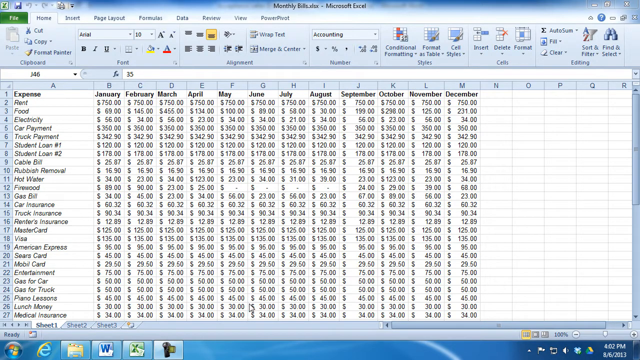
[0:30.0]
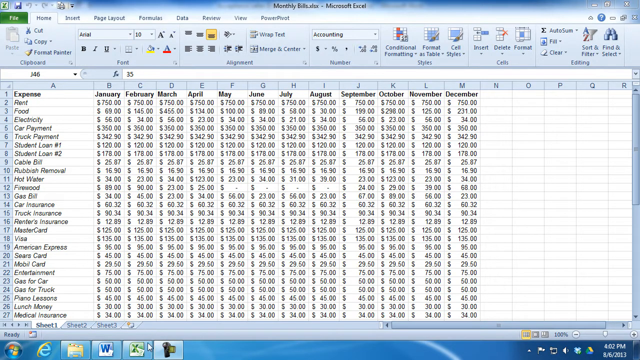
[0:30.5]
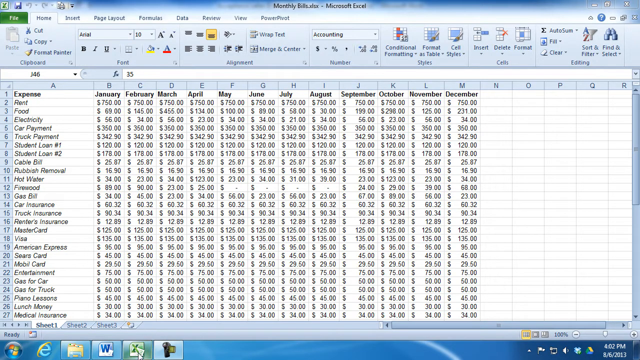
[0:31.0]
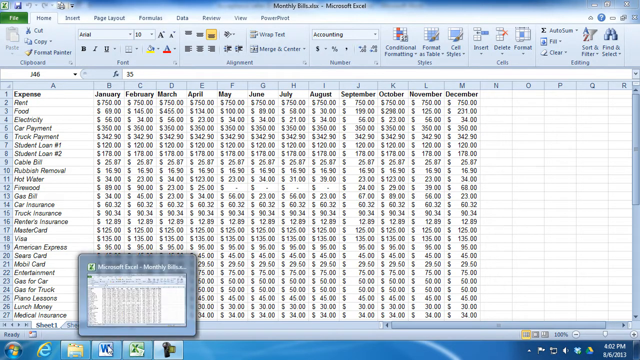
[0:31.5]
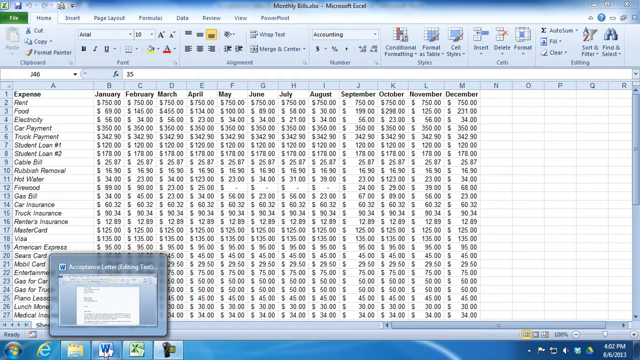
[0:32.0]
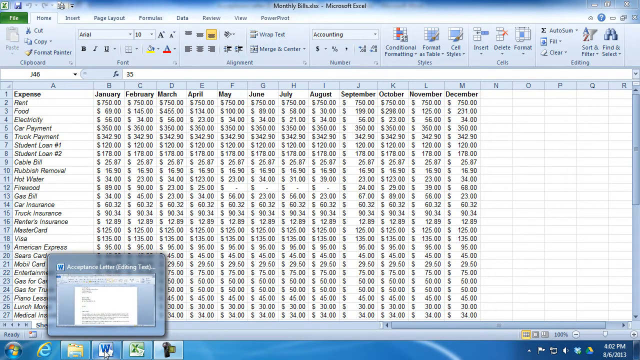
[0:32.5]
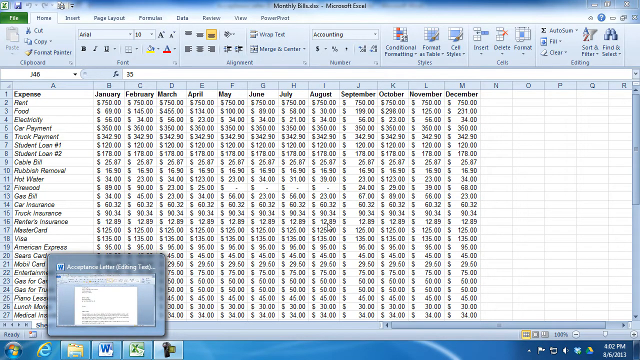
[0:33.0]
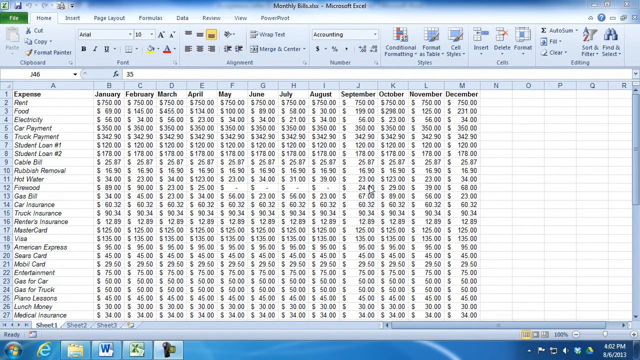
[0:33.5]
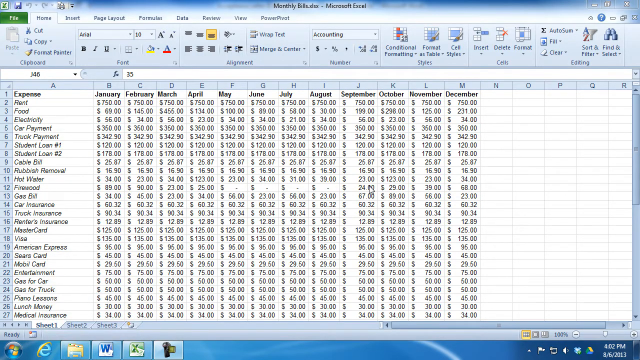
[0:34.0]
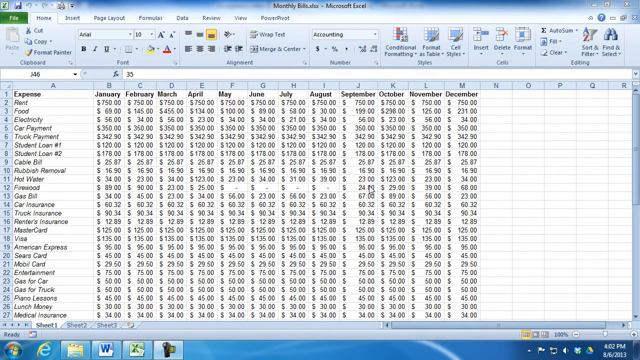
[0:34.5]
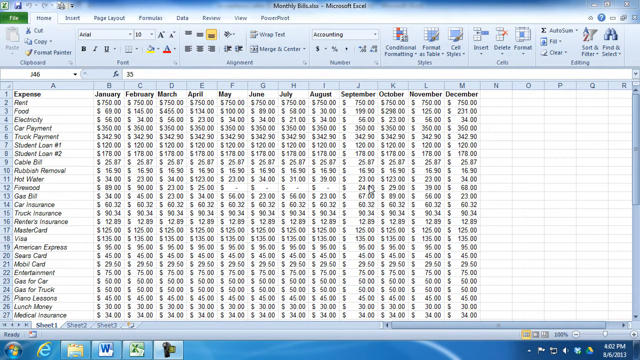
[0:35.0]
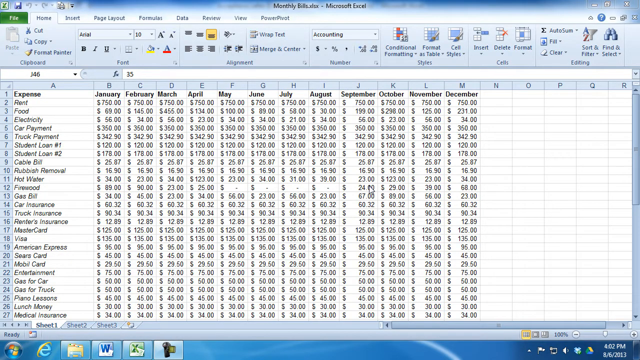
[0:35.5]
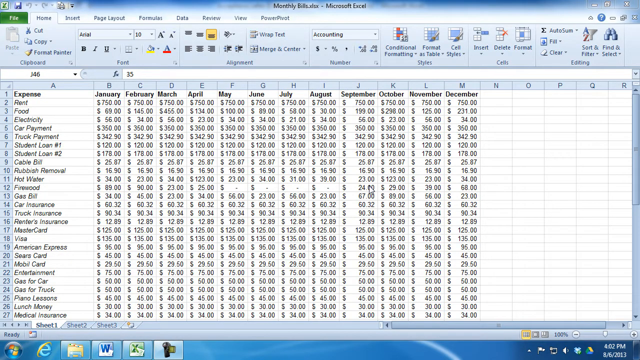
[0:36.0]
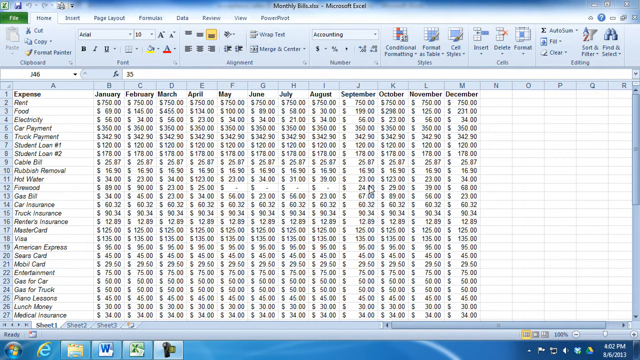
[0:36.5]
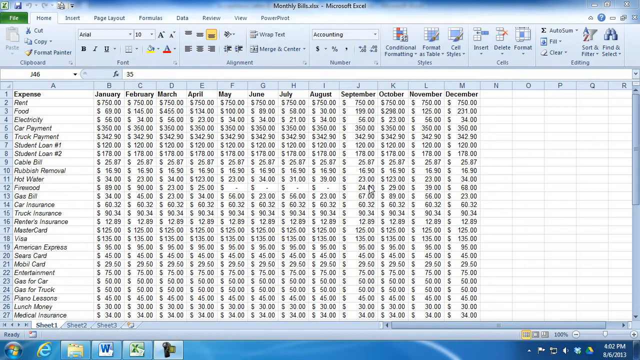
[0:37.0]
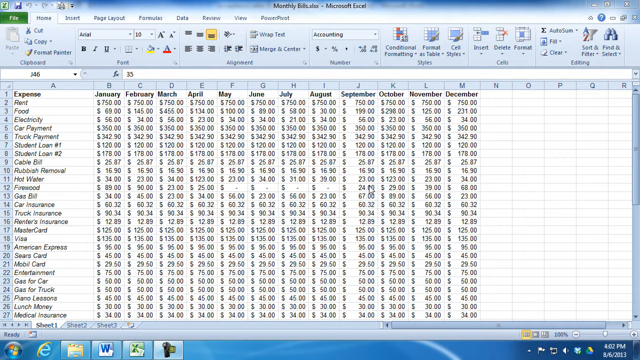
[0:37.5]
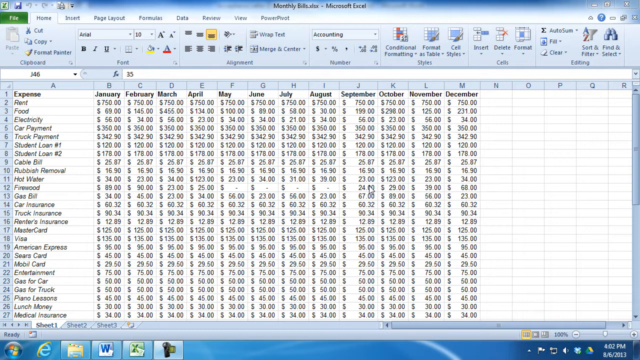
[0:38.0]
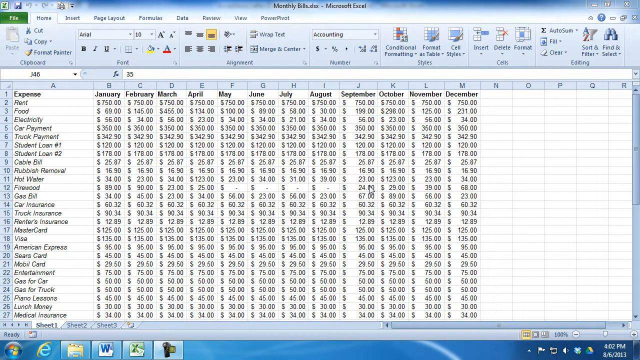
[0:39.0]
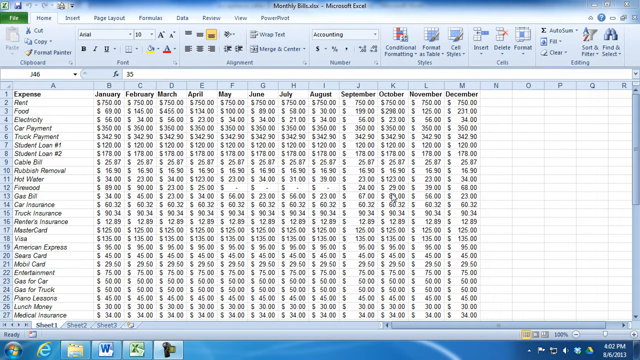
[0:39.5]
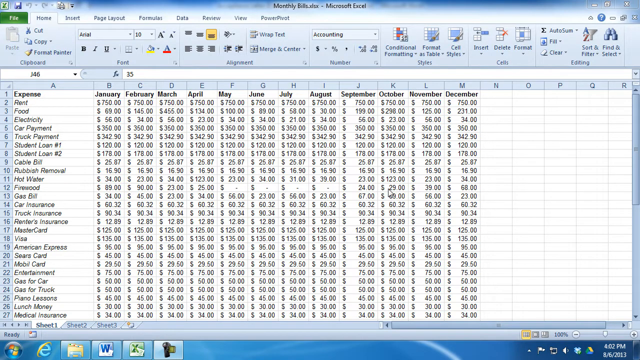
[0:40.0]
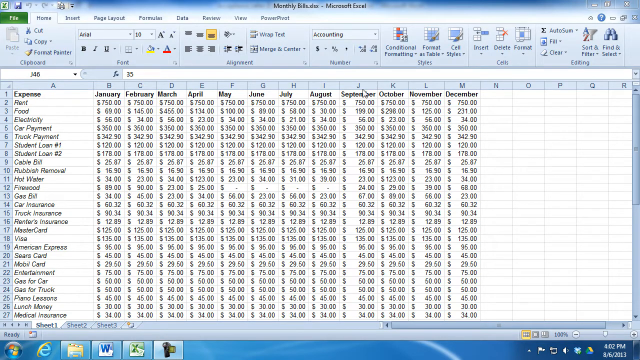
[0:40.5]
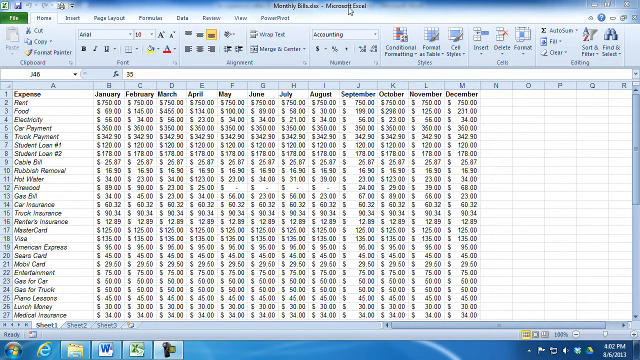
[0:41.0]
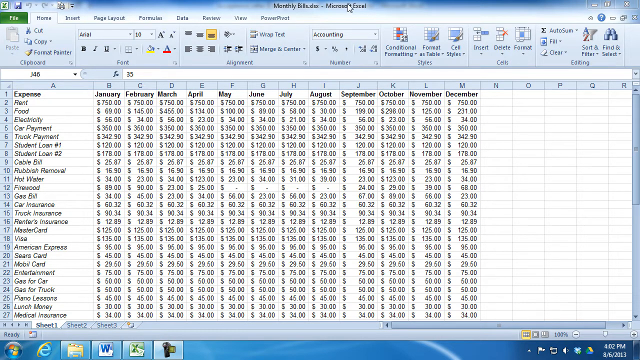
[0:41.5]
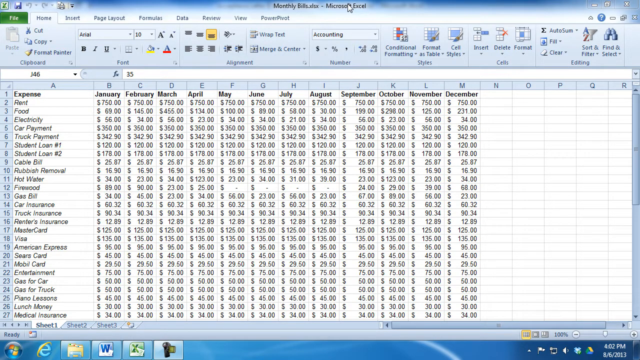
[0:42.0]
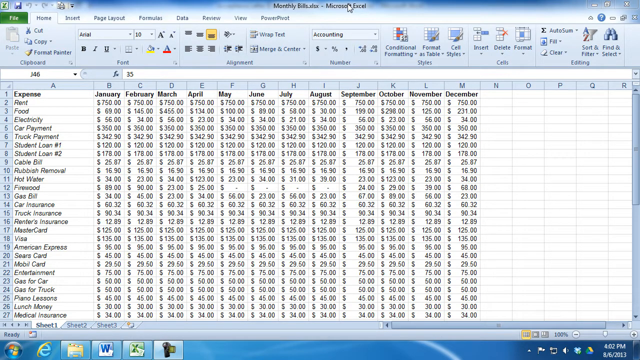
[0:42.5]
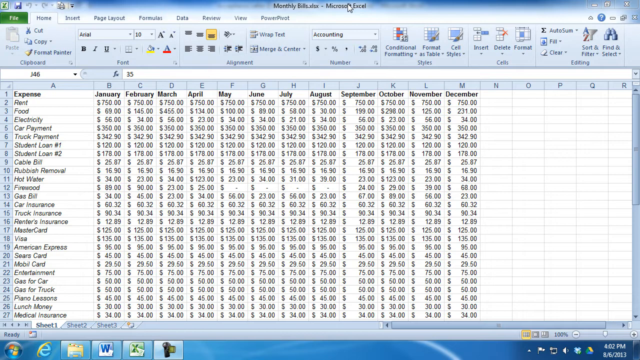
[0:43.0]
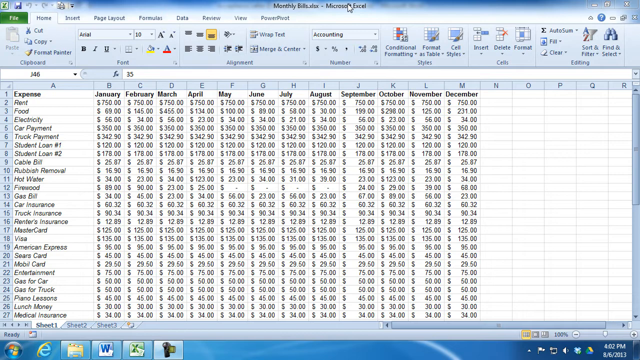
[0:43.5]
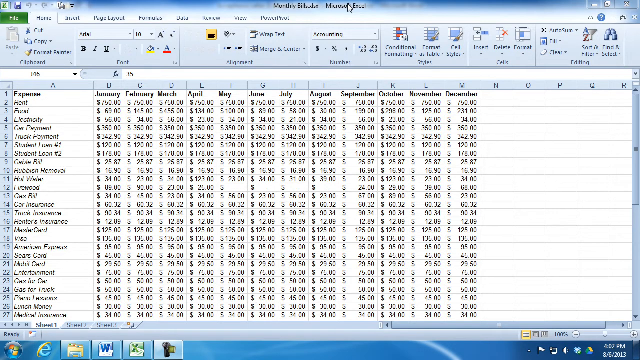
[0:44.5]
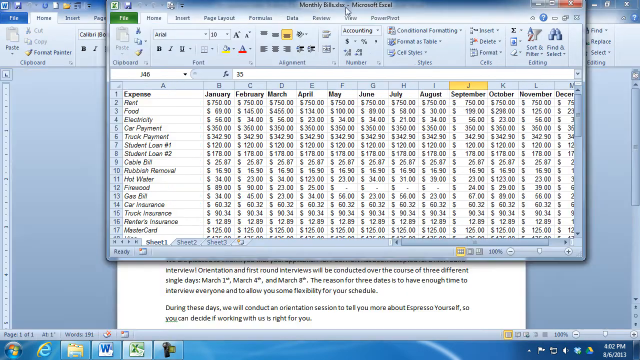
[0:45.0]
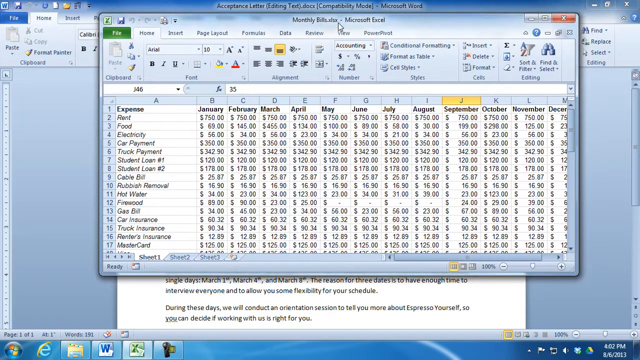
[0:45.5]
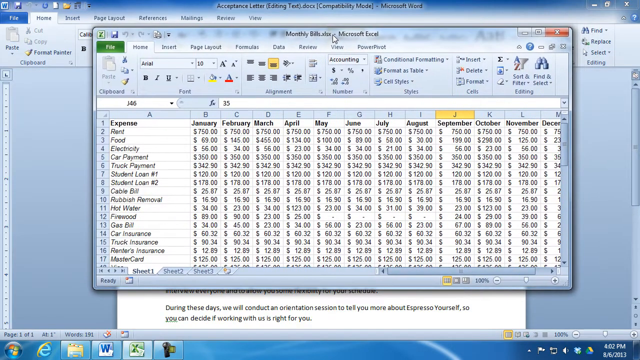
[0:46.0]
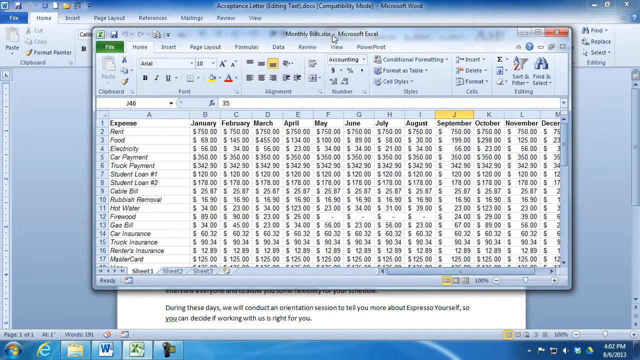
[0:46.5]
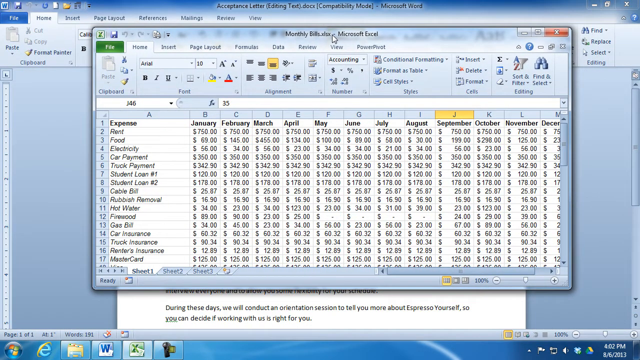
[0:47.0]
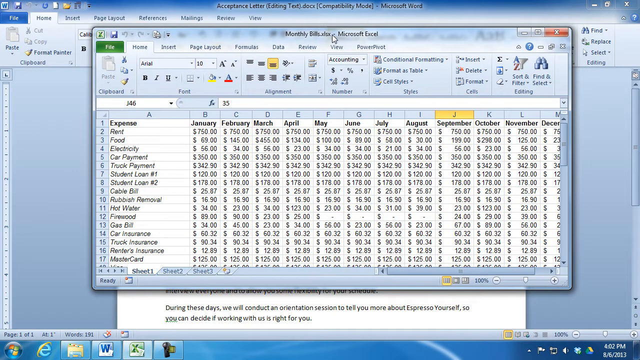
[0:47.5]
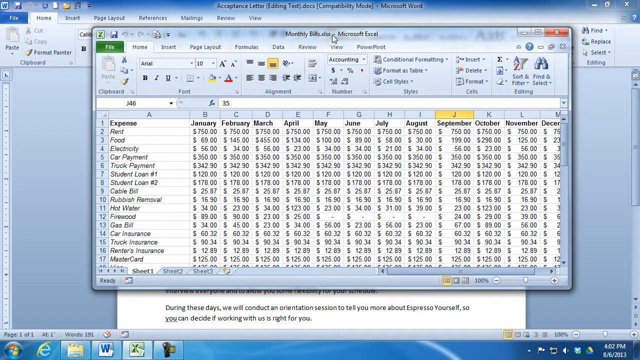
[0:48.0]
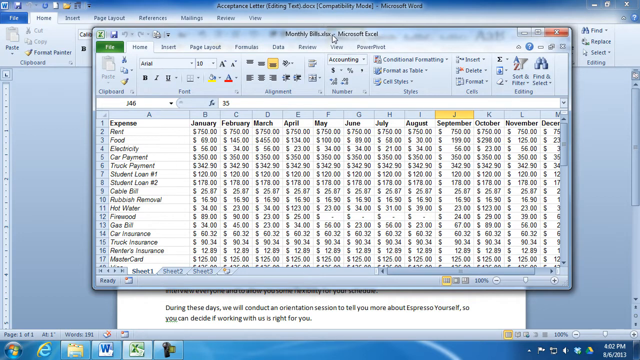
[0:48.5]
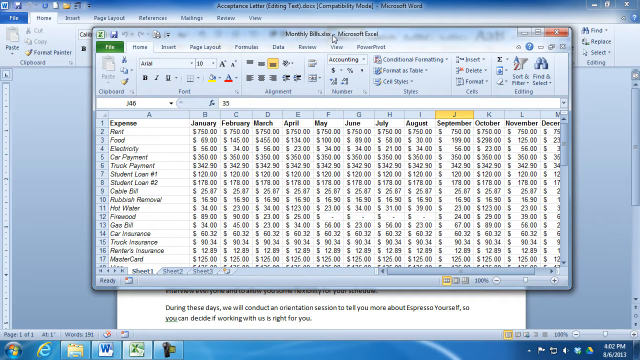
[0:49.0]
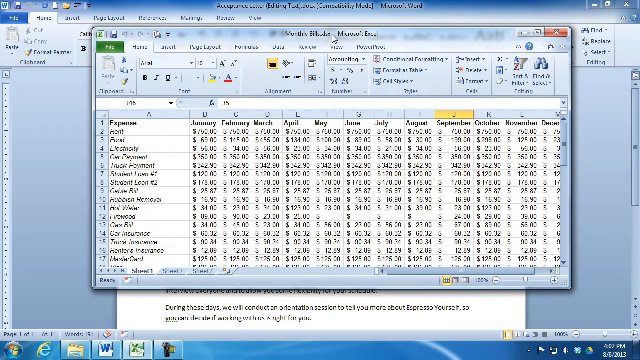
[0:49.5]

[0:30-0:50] A man moves the mouse pointer down to the bottom of the screen and, without clicking, hovers over different tabs, which show different documents. Hovering over Excel brings up a small thumbnail preview box, and an acceptance letter in editing mode also appears in preview. He then brings the cursor back up to the column labeled September; across from firewood the value is 24 dollars, and the white mouse pointer rests on it for a moment. Next he moves over to the right of the $29 for firewood. He goes up to the top, just above the accounting drop-down box, and then moves the pointer all the way up to the monthly bills title. He clicks and begins dragging, and the monthly bills window shrinks instead of taking up the entire screen. Behind this box, the acceptance letter he previewed earlier is visible; its title reads "acceptance letter (editing)" and it is in compatibility mode. He drags the window for a second and then lets go.